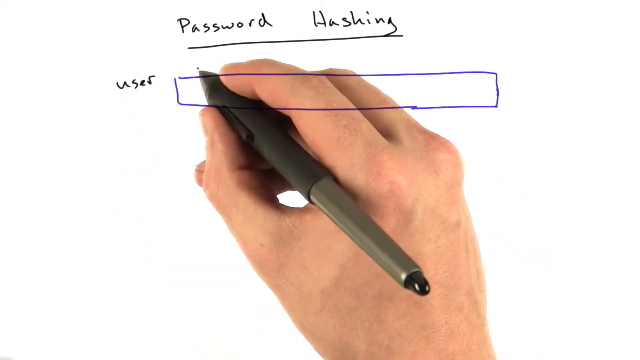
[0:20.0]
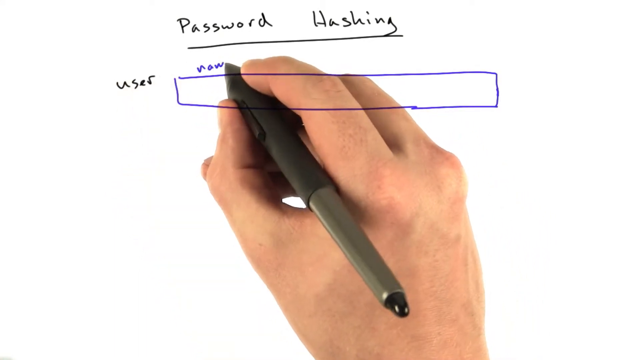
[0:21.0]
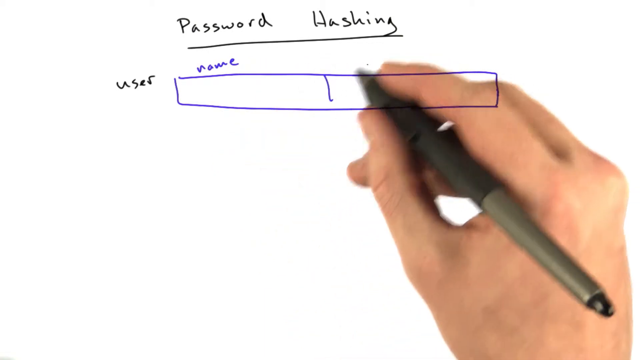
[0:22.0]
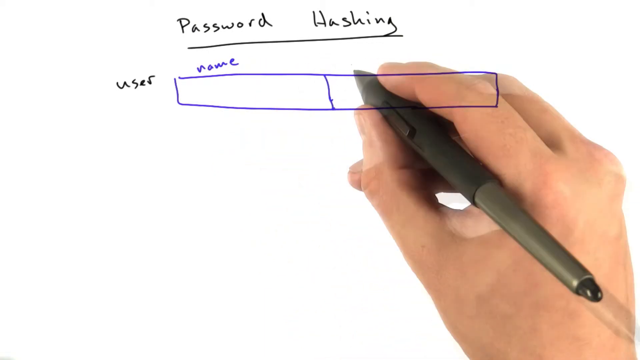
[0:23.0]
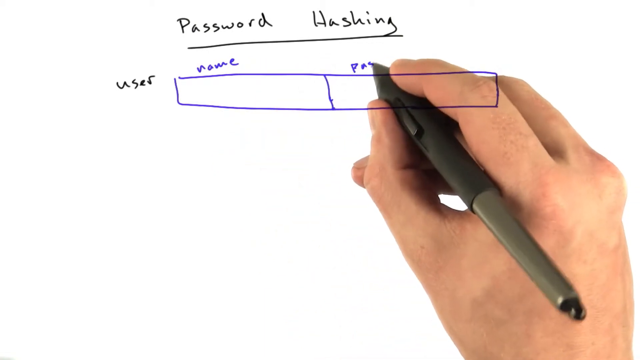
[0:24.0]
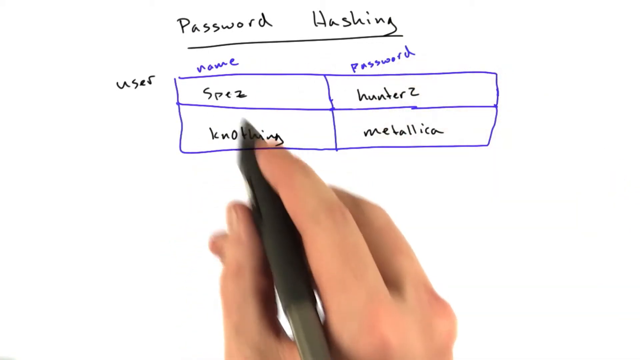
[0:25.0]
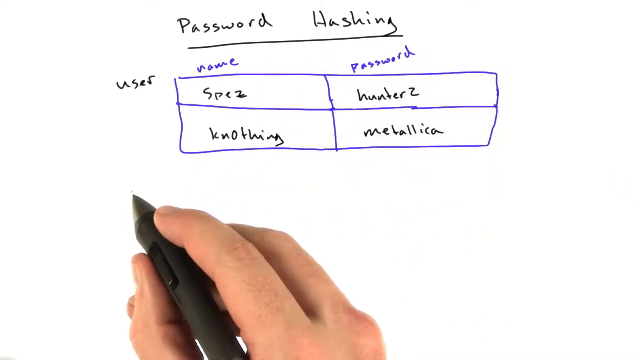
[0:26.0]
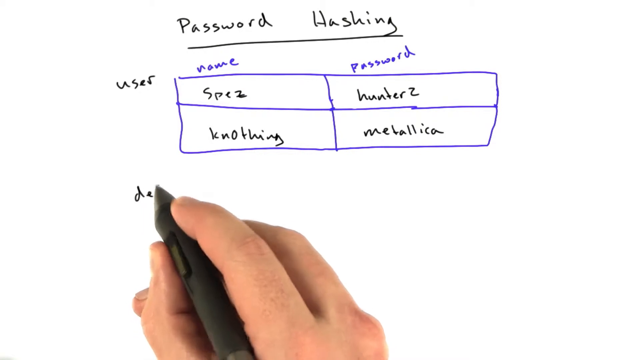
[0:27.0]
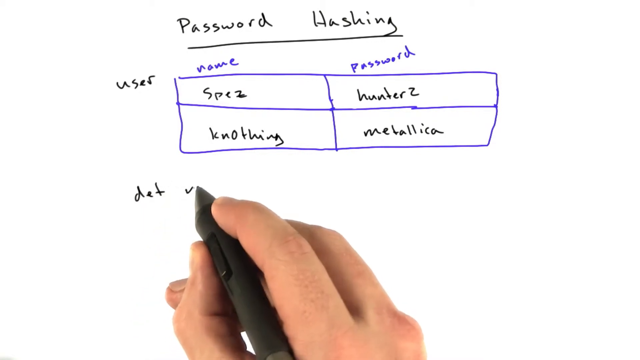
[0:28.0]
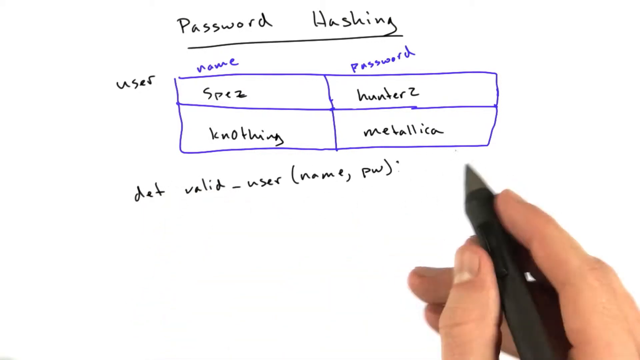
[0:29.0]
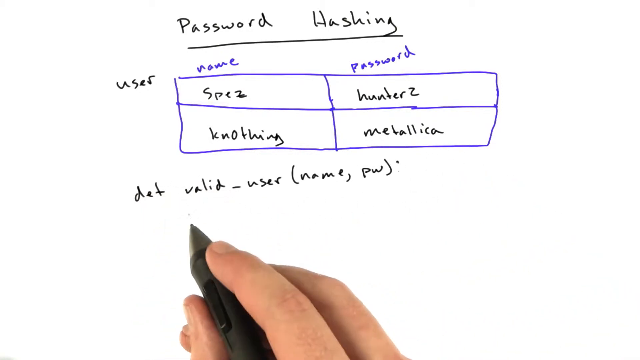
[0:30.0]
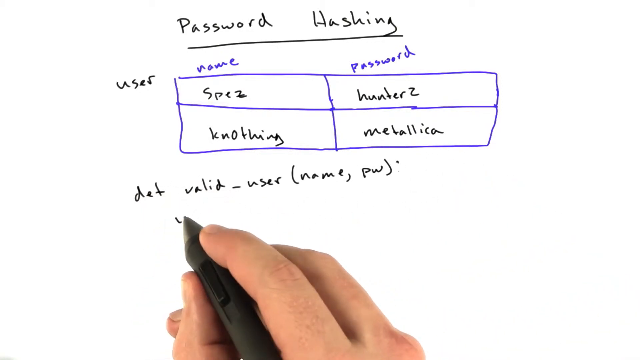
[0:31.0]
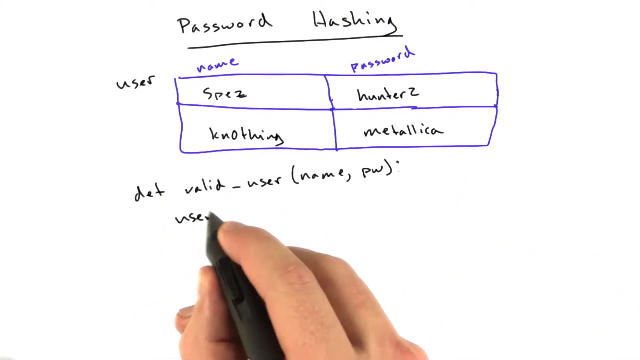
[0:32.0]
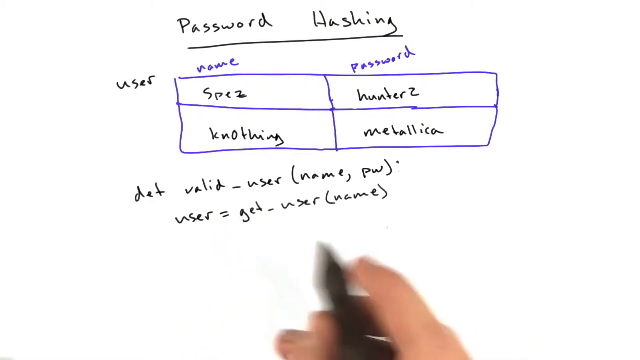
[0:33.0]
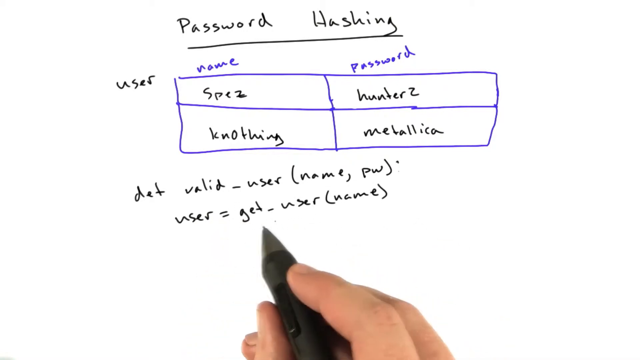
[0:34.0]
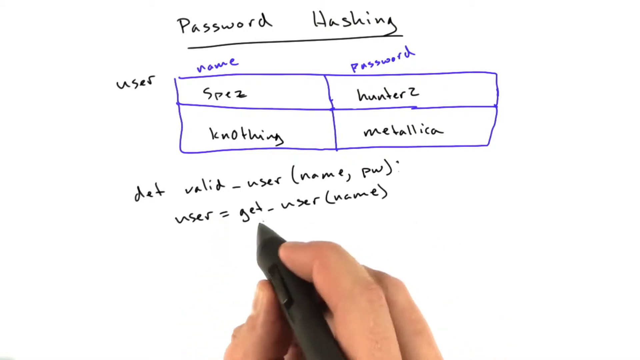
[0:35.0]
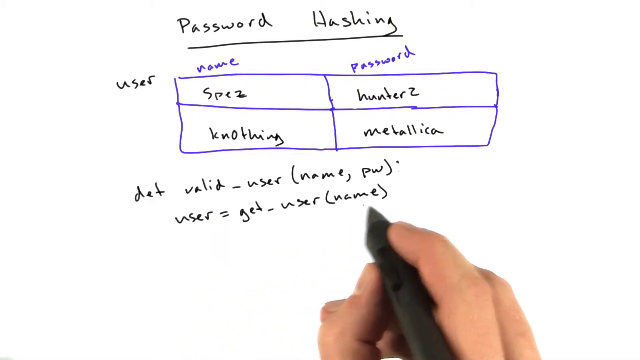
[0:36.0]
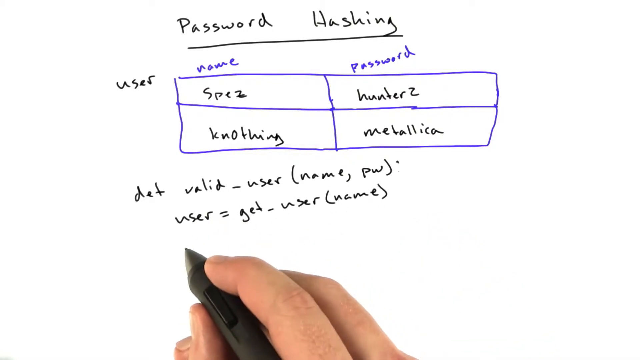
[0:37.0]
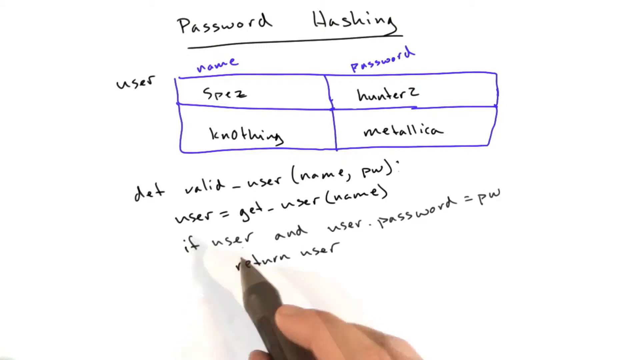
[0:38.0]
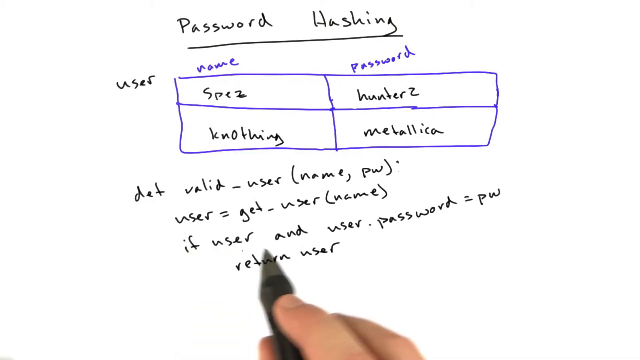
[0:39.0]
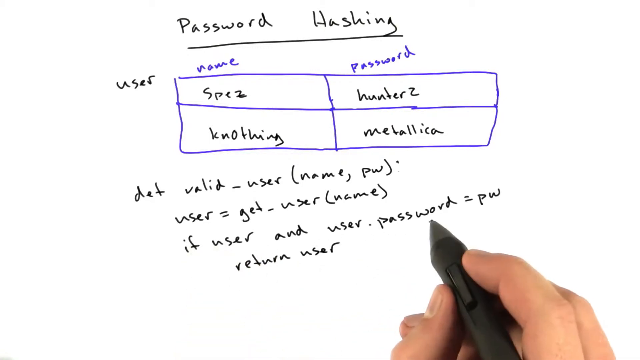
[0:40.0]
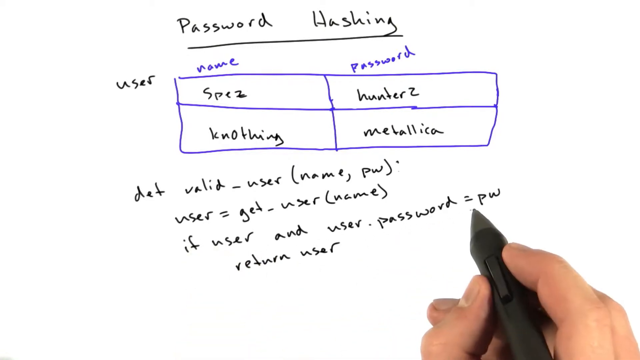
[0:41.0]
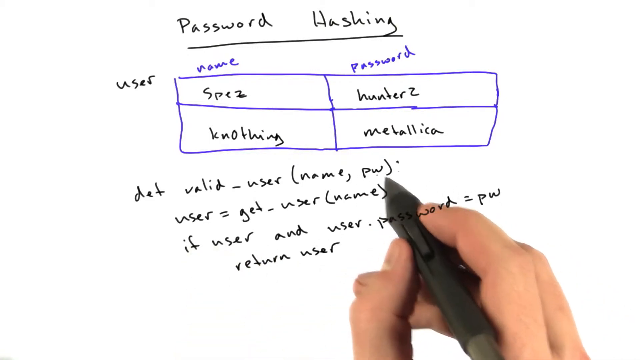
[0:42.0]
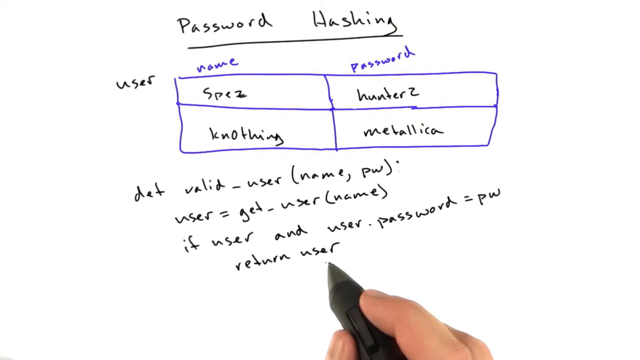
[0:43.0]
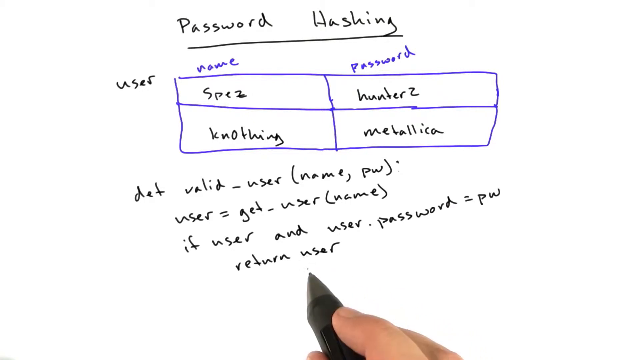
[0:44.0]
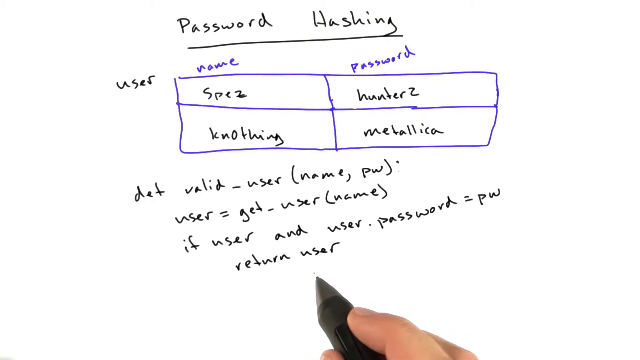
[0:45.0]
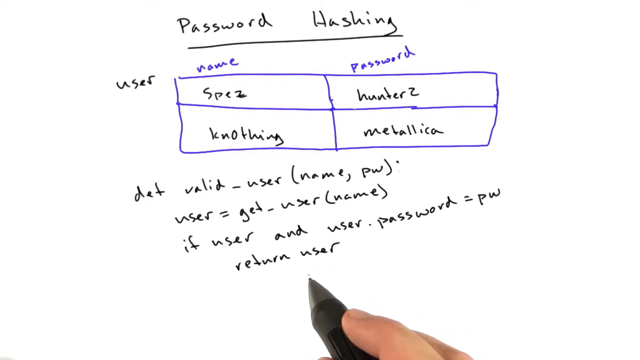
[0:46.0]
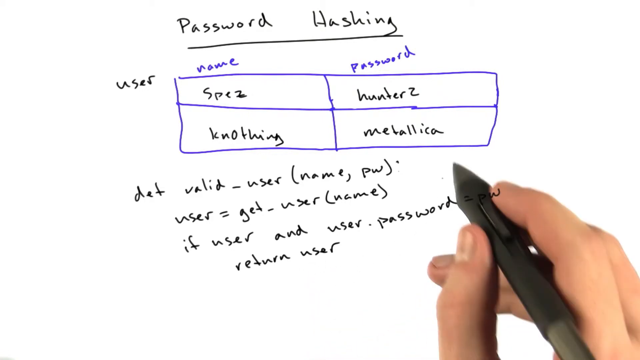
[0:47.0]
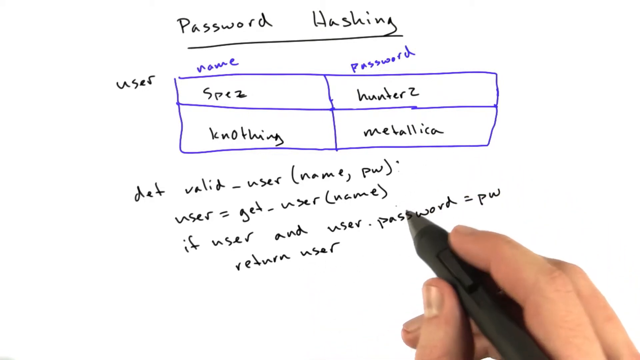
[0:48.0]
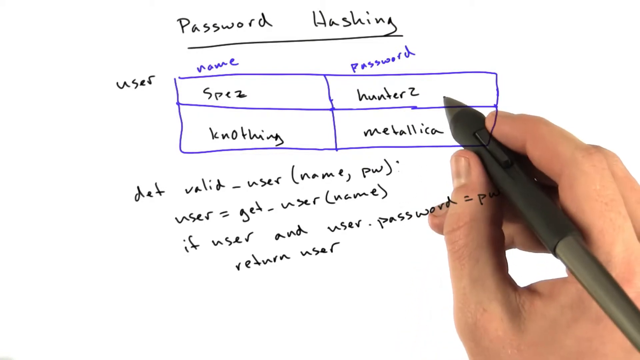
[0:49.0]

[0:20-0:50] He continues working on the list drawn with his pen, which is blue. The scene transitions and shows that rather than a list, it is more like a table of two columns and two rows. At the top of the left column he has written the word "name", and at the top of the second column the word "password". In the first row the name is SPEZ and the password is HUNTERZ; in the second row the password is METALLICA. Below the table he has written text defining what appears to be a function in pseudocode, in a style similar to Python, which receives the user's name and checks whether the user exists.